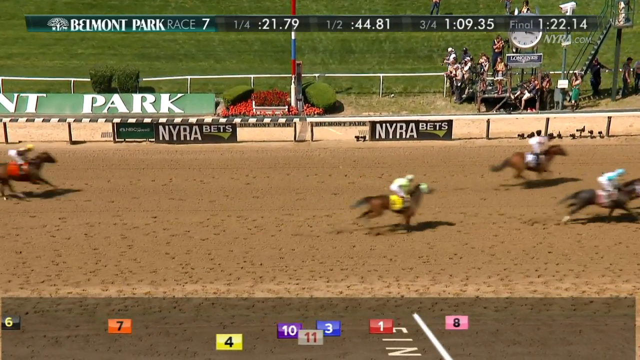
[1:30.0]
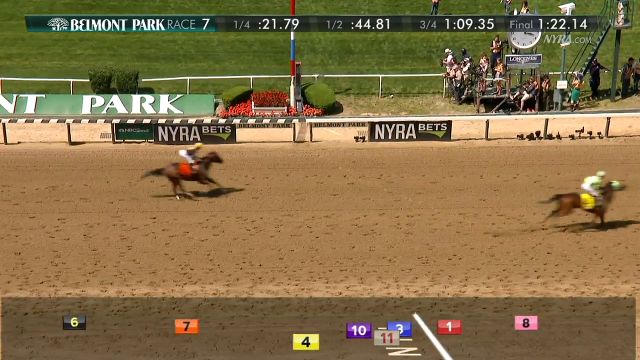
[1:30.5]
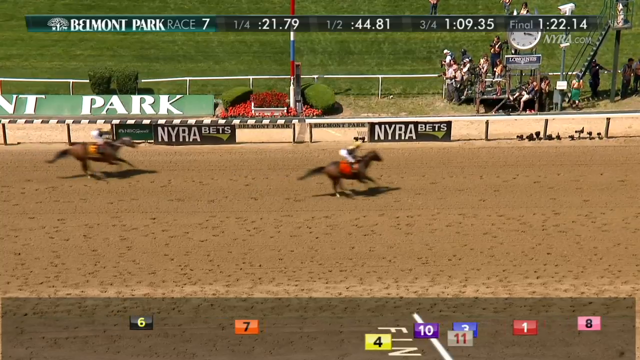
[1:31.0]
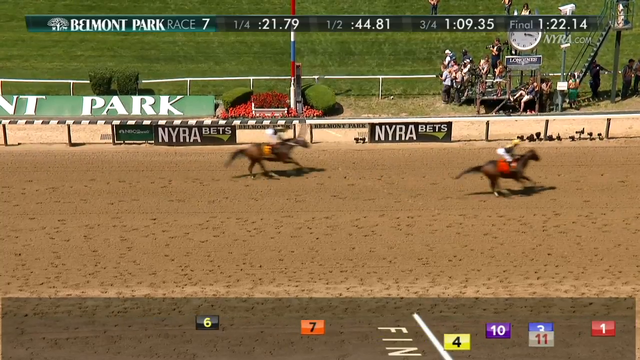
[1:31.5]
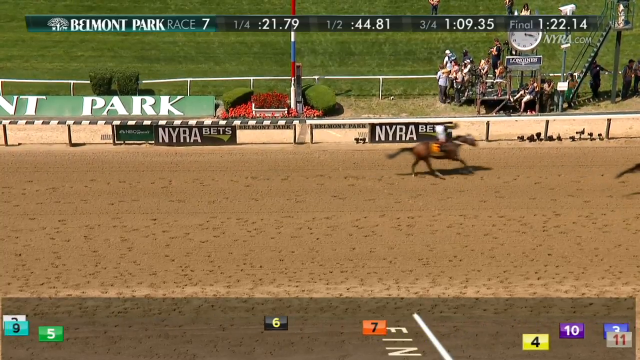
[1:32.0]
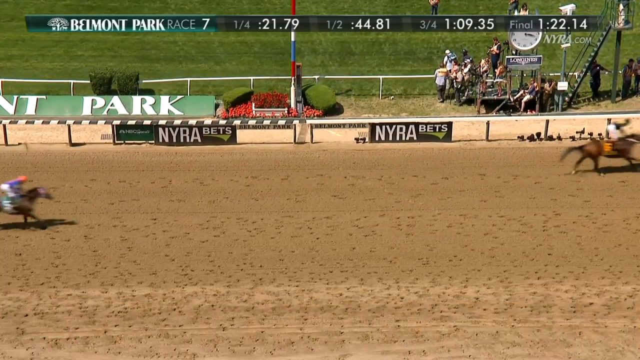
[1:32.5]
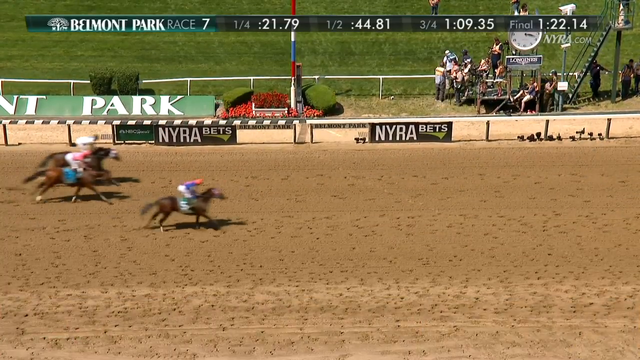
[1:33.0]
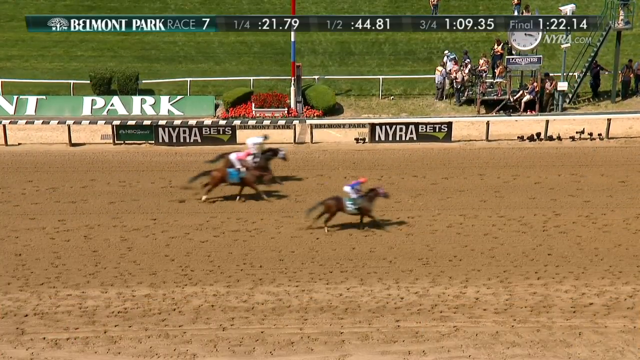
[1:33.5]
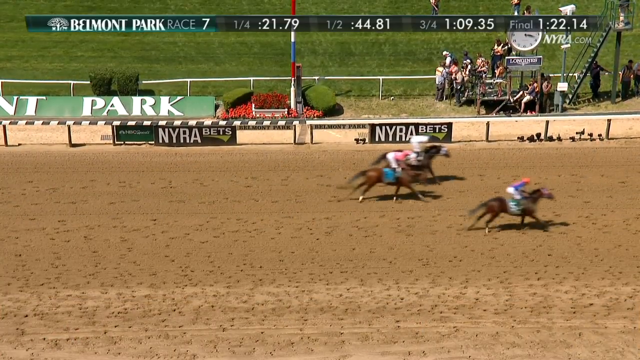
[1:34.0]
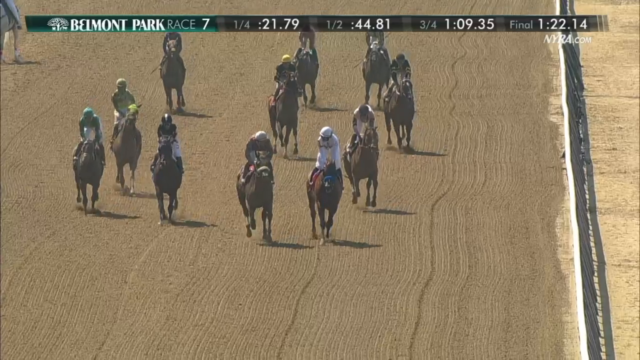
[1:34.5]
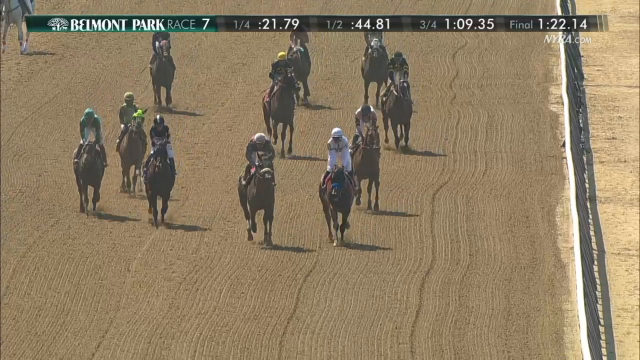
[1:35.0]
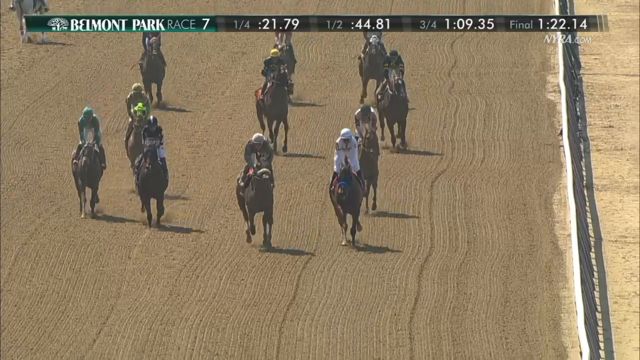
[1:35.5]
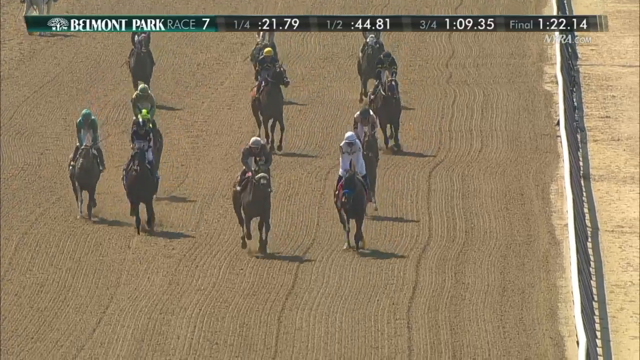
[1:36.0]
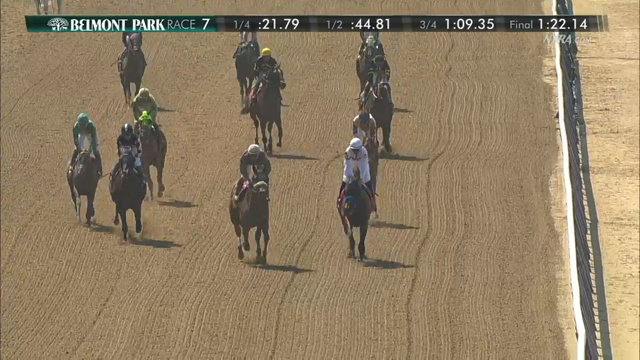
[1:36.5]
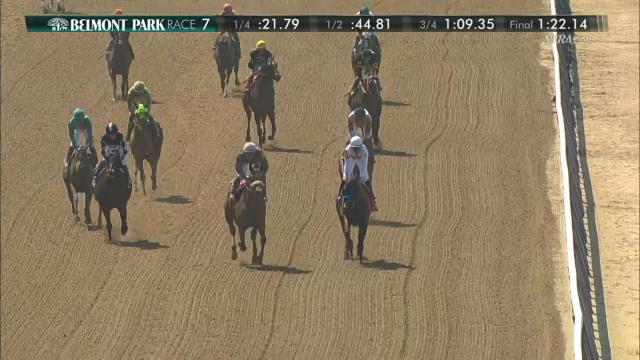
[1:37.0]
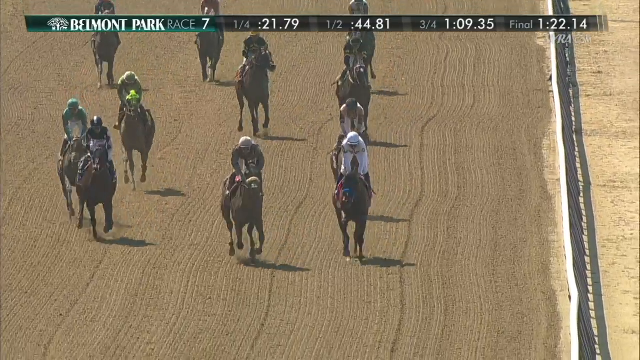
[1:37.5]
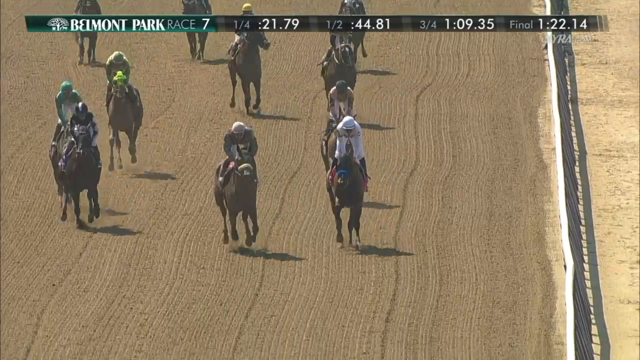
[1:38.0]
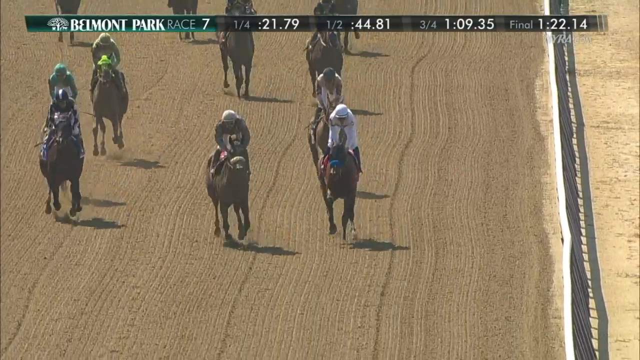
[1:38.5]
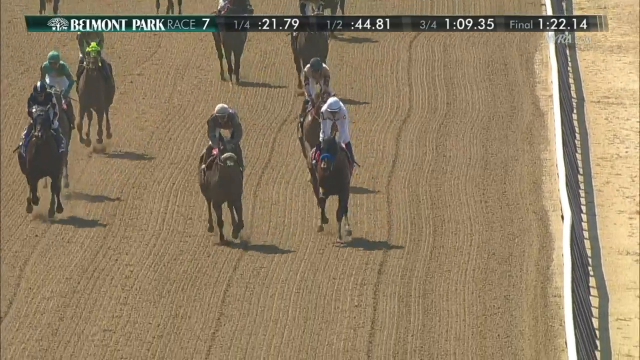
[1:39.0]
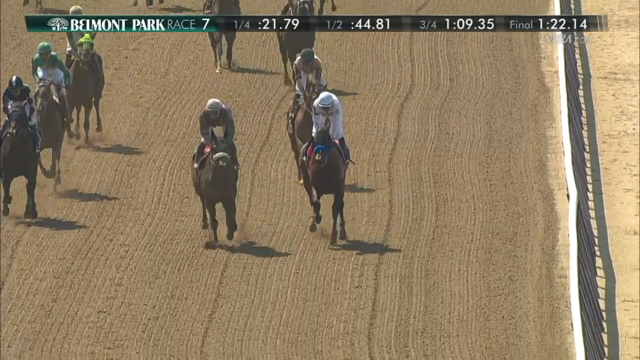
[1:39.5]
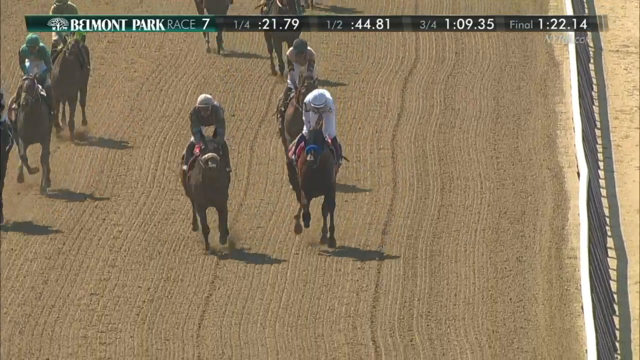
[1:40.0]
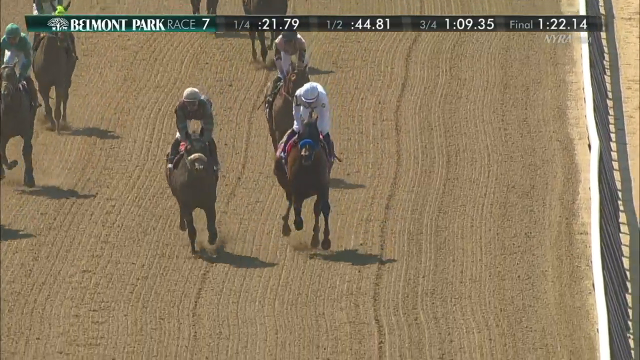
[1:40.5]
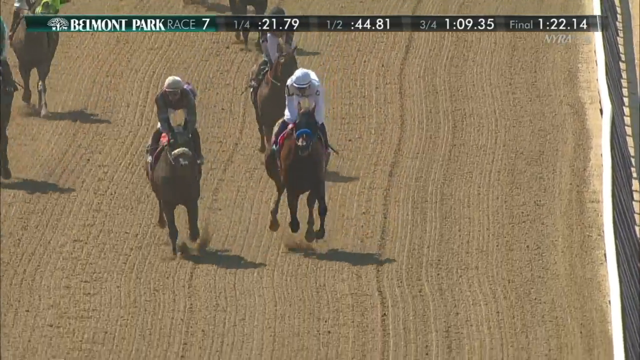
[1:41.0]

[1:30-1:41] The horses cross the finish line past a long red, white and blue pole that goes far up, taller than the other striped poles. "NYRA BETS" banners are on the fence to the left and right after the finish line, with "NYRA" in big capital letters and "BETS" to its right at about half the banner's height, and a green line starting from the B that thickens to the right and slants in to a point. Above that is "Belmont Park" on a large red sign that seems permanent, slanted back. People stand on a small staircase taking pictures, and there is an analog clock with a white and brown face. Number five finishes ahead of two others. The view then cuts to a zoomed-in shot of the racetrack from the front, with the horses spread out as they finish. The dirt has vertical grooves that look like a machine was run through it. The final time looks like 1:22.14.